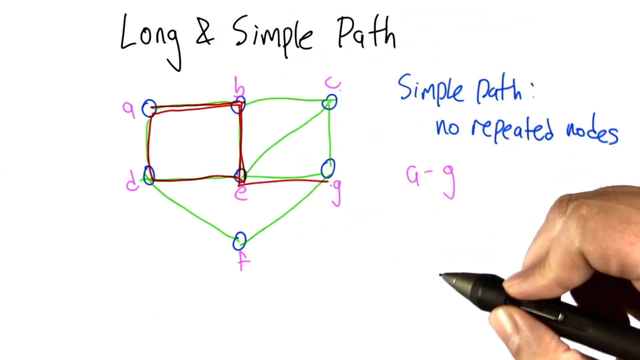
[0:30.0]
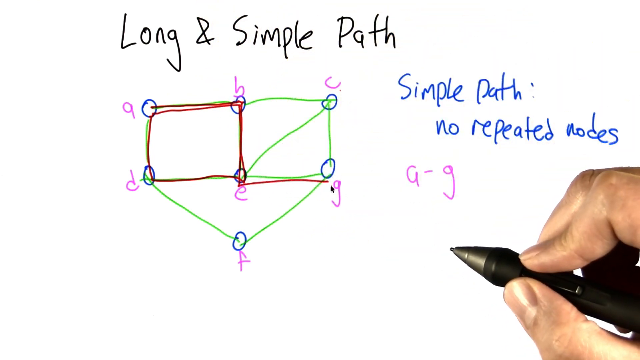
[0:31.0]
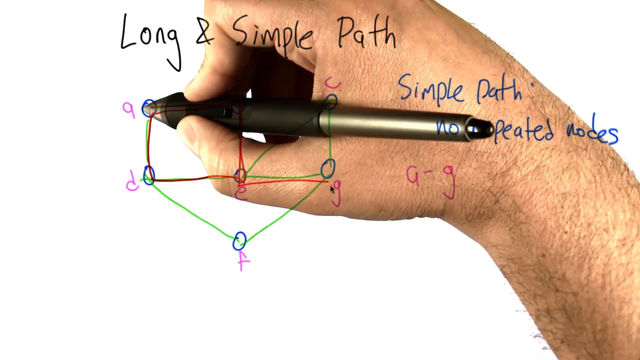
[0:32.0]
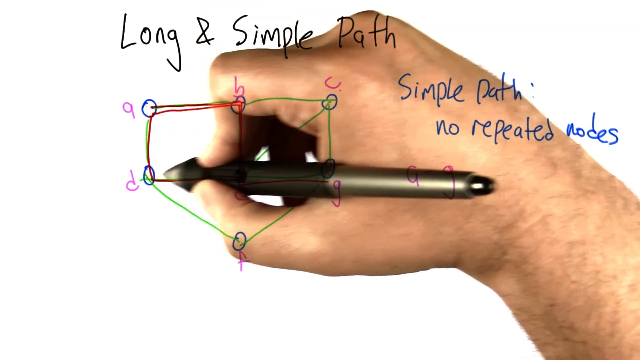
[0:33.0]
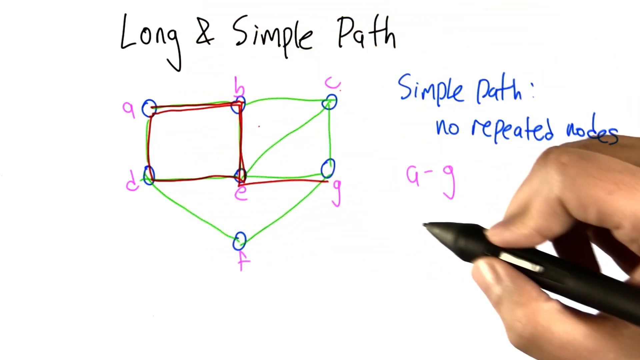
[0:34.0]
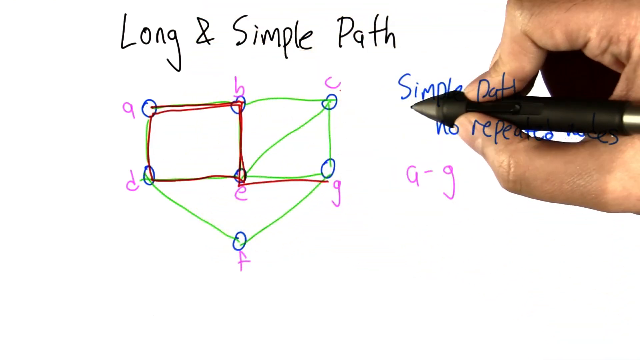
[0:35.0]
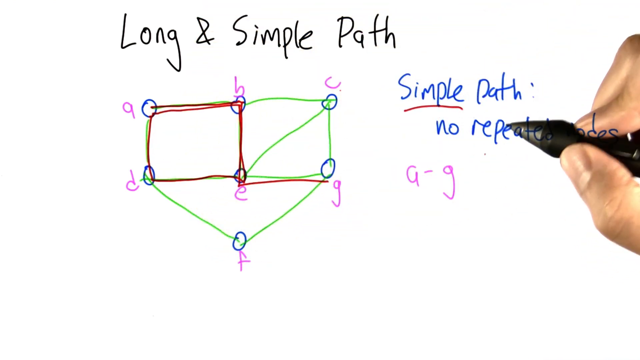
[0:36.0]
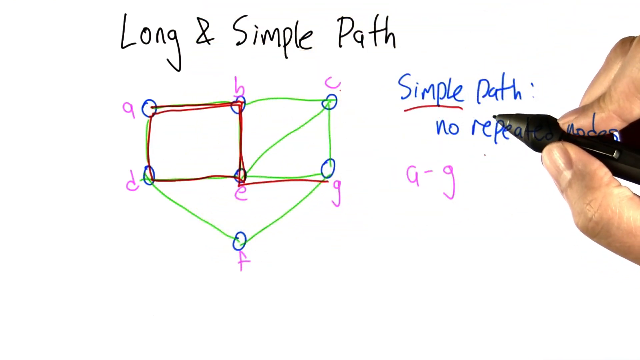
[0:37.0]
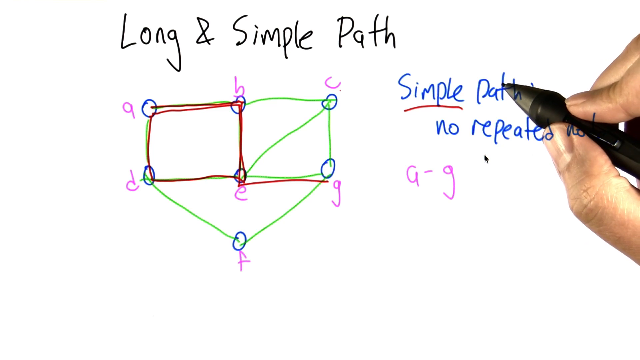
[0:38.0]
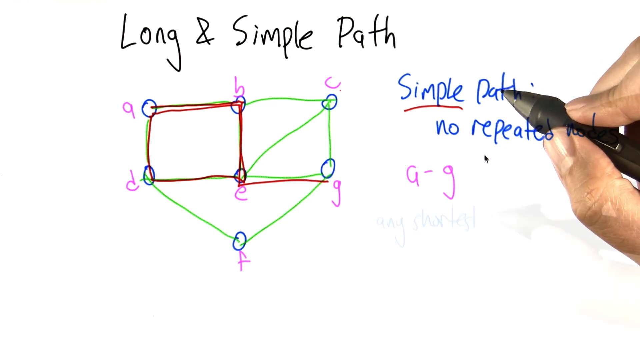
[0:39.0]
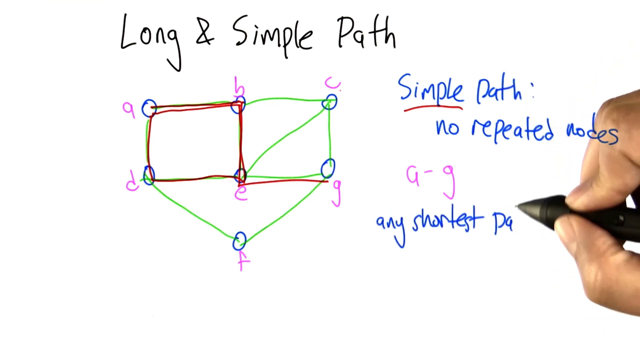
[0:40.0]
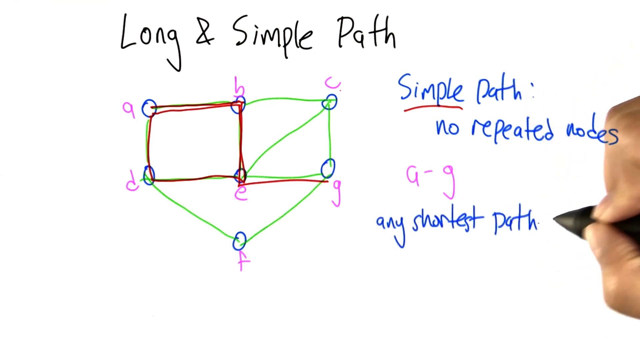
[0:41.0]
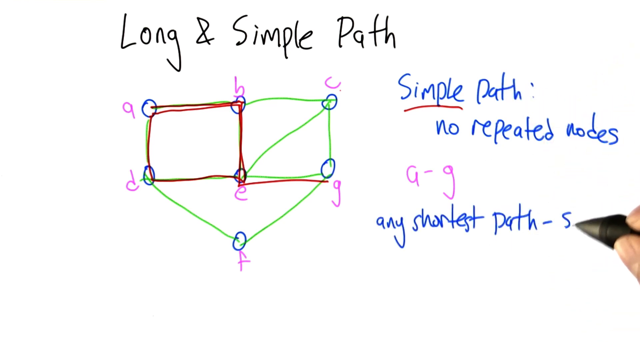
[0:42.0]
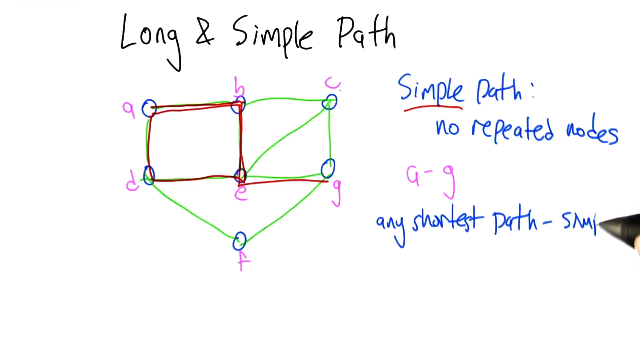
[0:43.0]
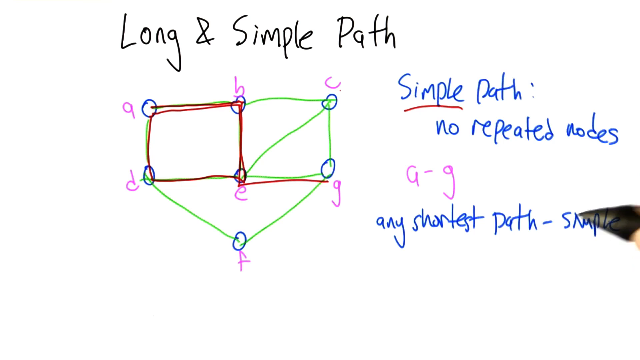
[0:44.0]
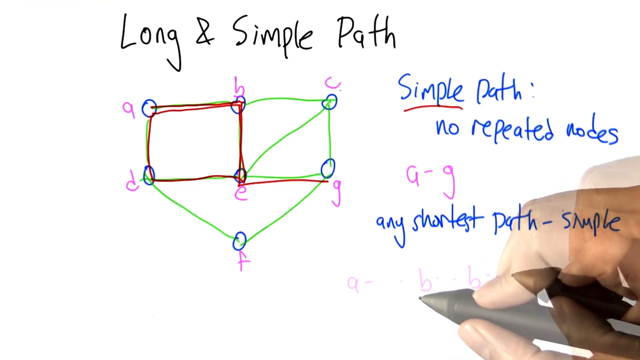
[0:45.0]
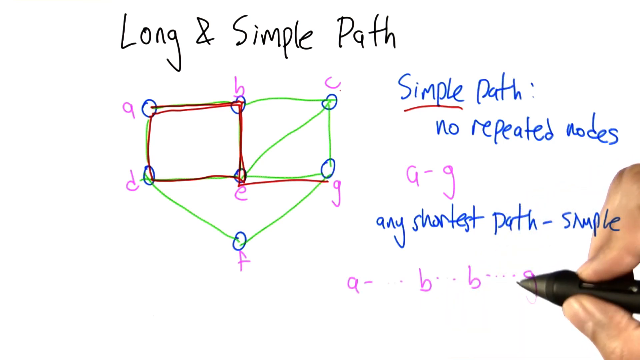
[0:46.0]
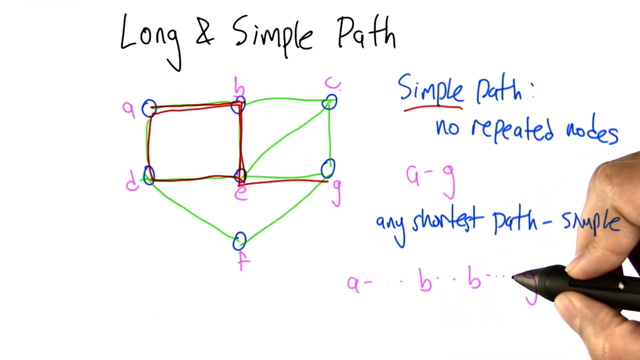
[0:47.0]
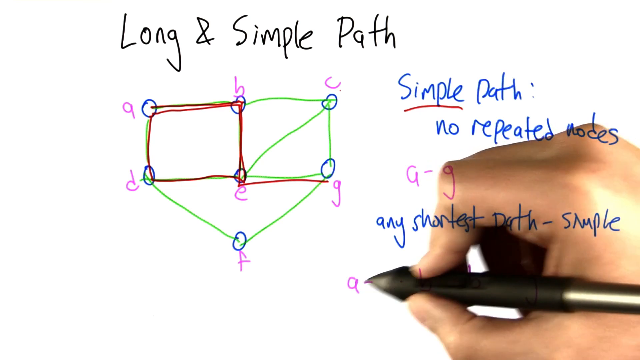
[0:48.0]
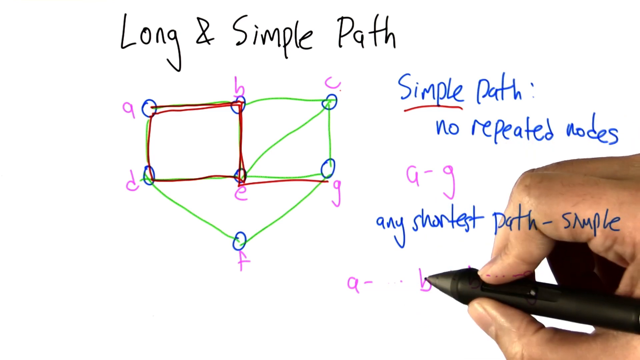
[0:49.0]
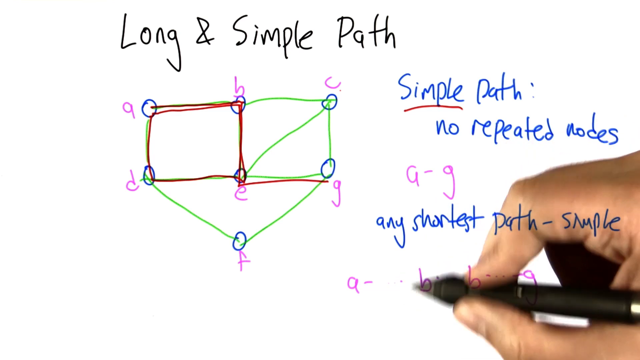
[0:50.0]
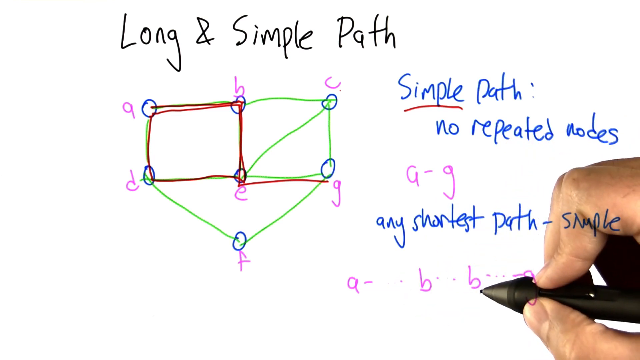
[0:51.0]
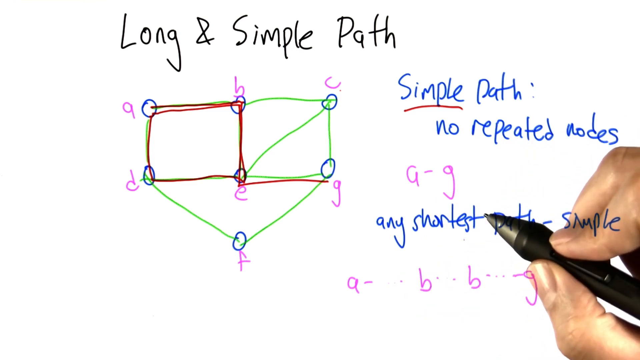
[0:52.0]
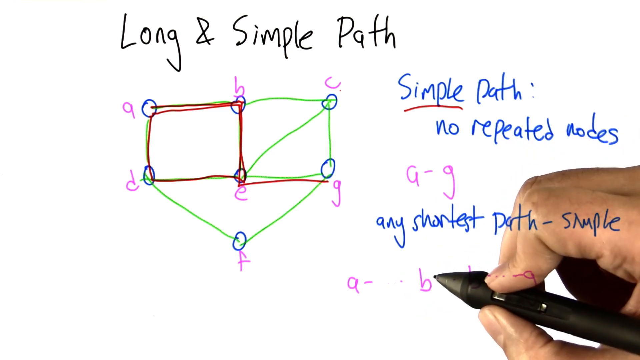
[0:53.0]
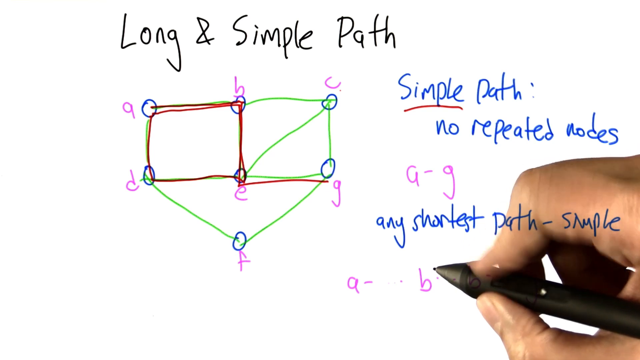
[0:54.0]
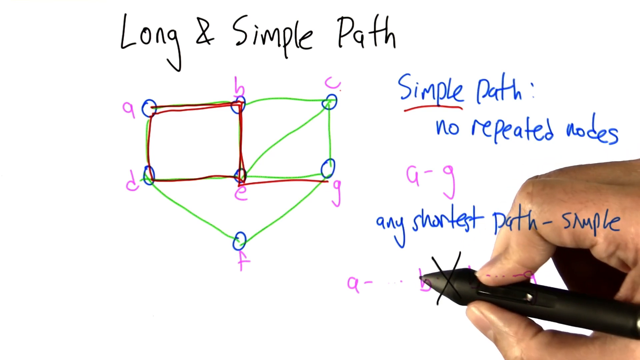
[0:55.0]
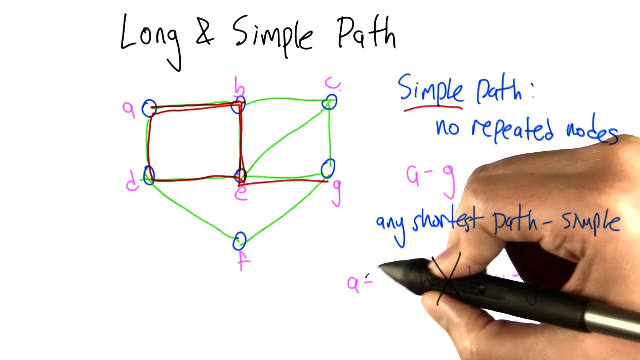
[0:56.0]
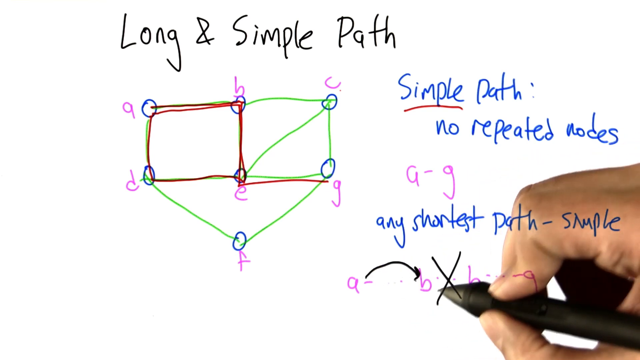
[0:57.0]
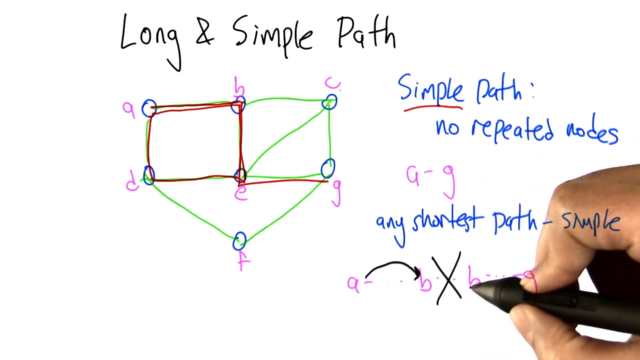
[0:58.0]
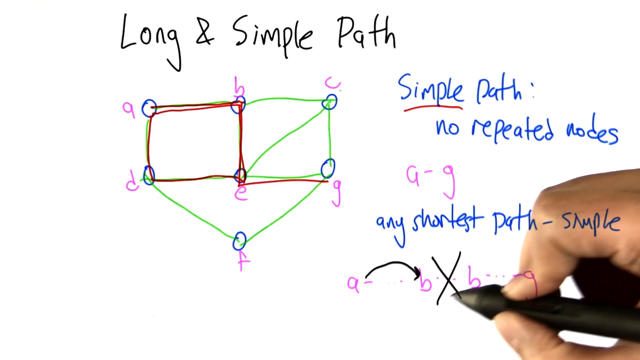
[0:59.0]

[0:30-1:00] A man's hand holds a pen and writes "simple path," using the pen to draw on the page. Only the hand is visible, not the person behind the pen. The sheet is white paper, with a white surface behind it that looks like a white chalkboard. An equation is also written on the page, and the hand moves as if showing what to do. The words on the paper are written in blue, lines are drawn in green at the bottom, red writing appears at the top, the alphabet letters are in pink, and other words are in black. The hand is white.